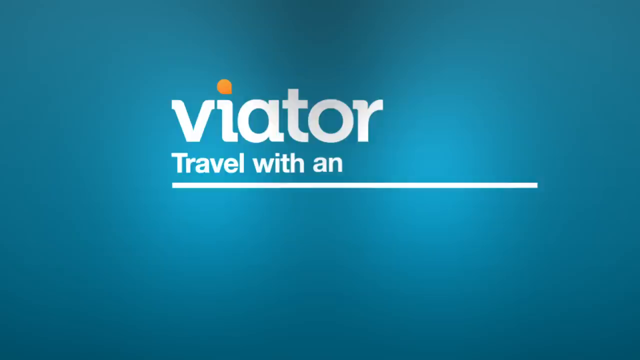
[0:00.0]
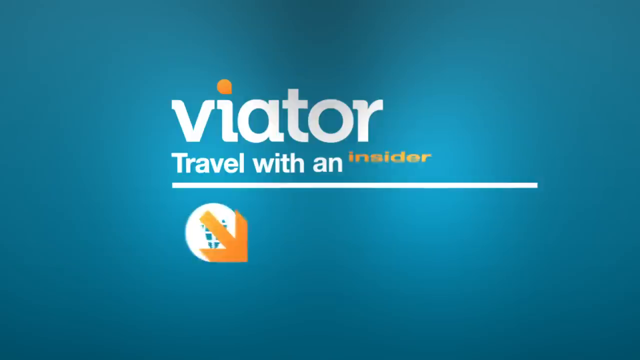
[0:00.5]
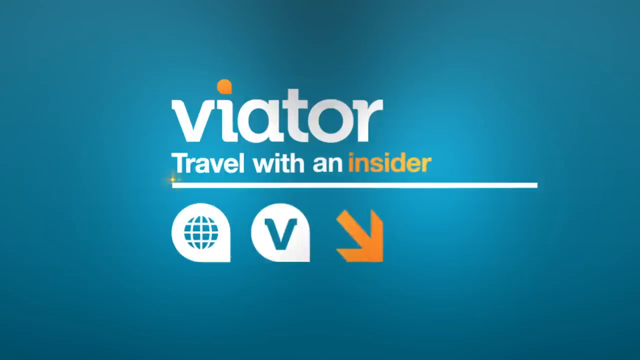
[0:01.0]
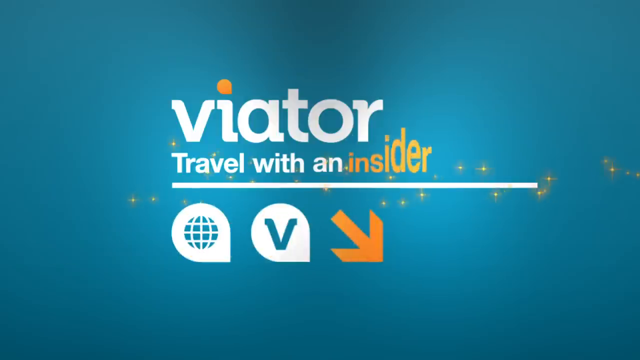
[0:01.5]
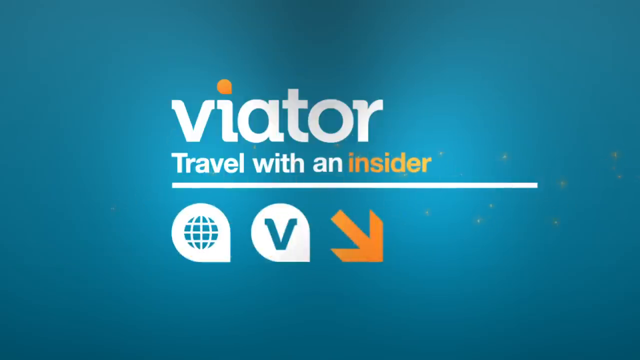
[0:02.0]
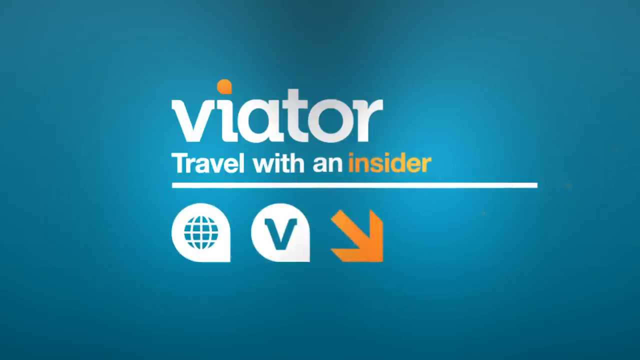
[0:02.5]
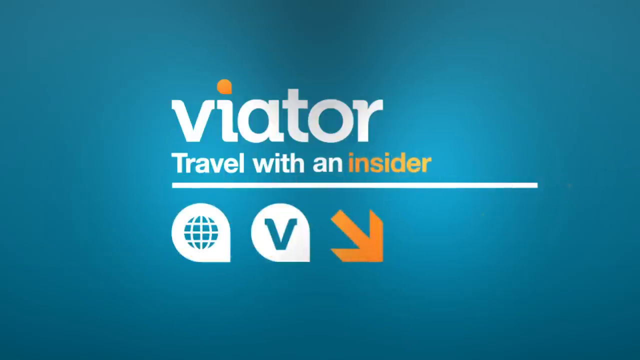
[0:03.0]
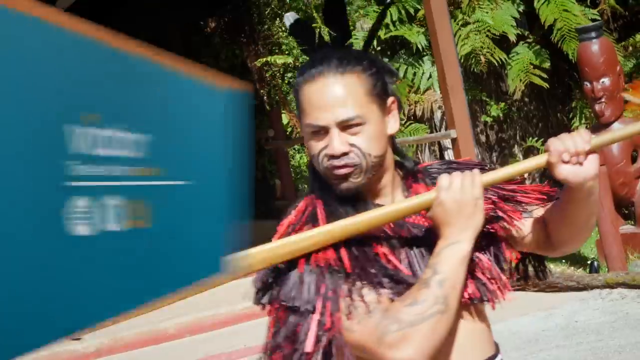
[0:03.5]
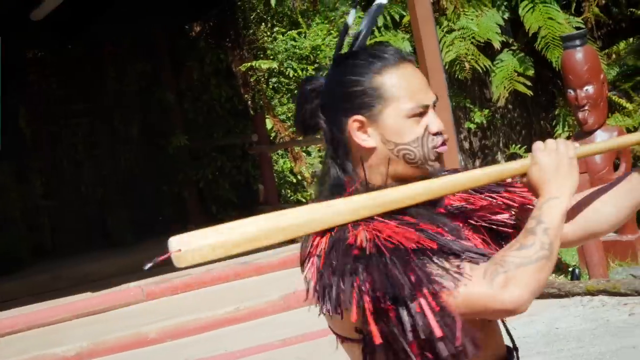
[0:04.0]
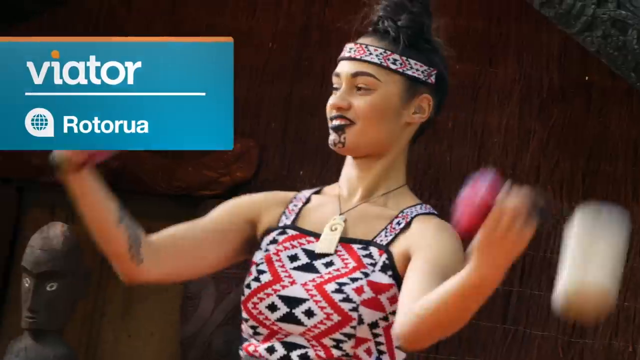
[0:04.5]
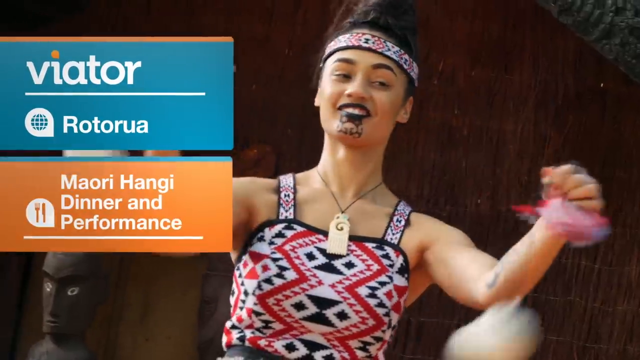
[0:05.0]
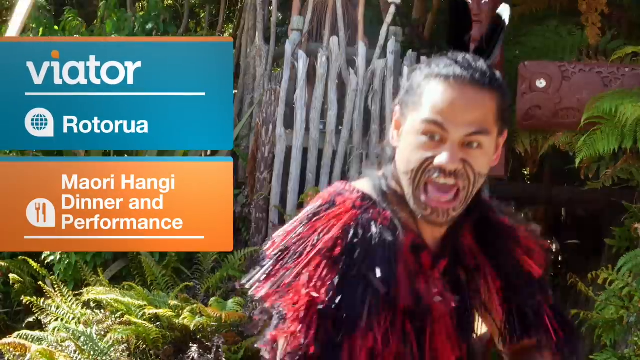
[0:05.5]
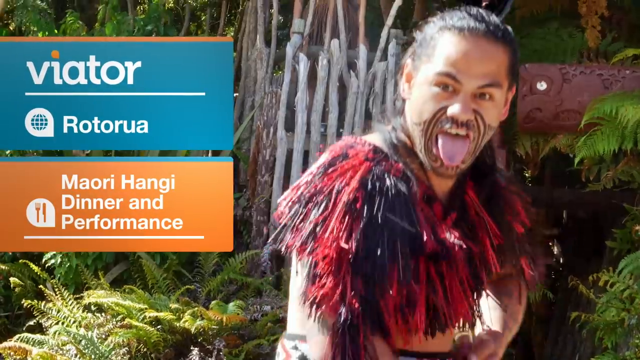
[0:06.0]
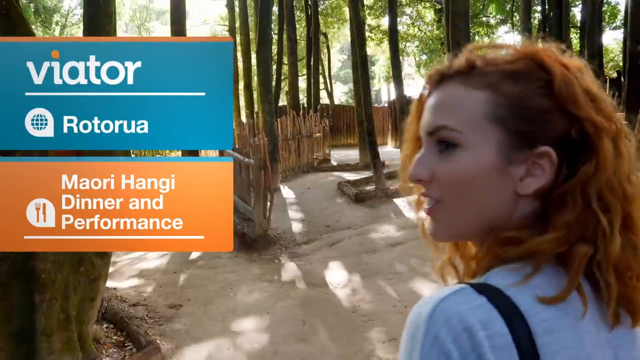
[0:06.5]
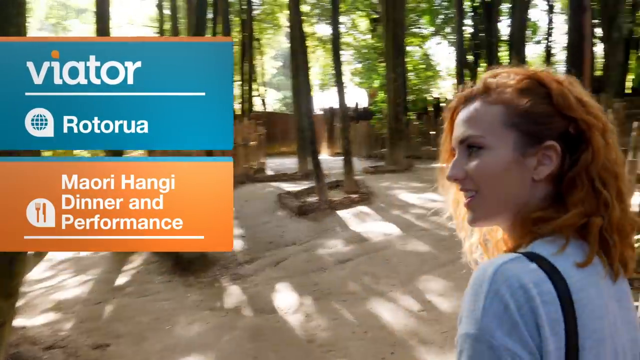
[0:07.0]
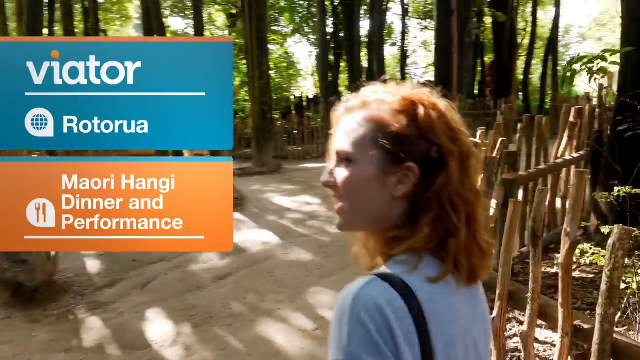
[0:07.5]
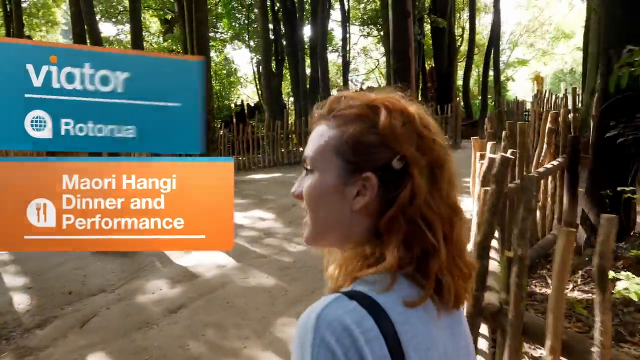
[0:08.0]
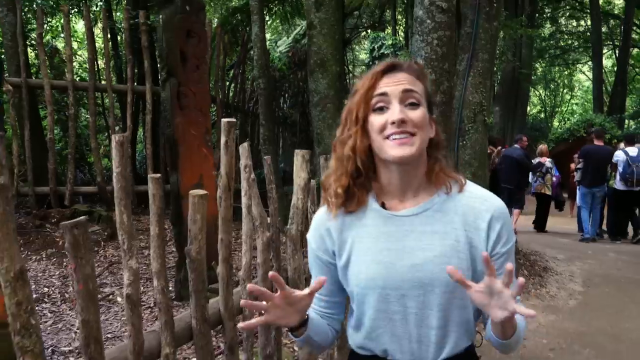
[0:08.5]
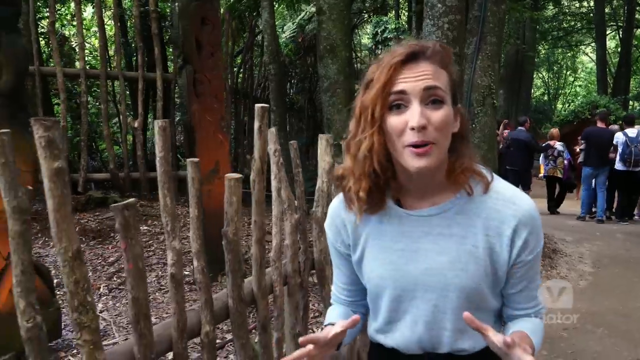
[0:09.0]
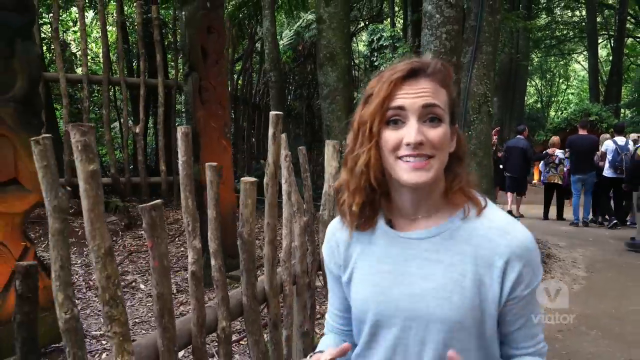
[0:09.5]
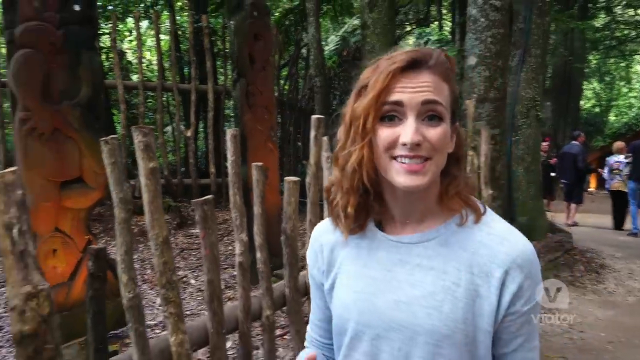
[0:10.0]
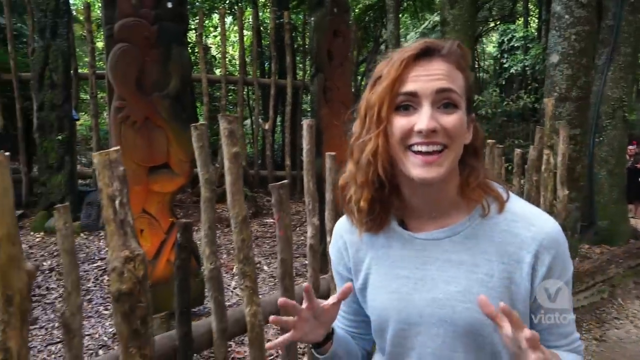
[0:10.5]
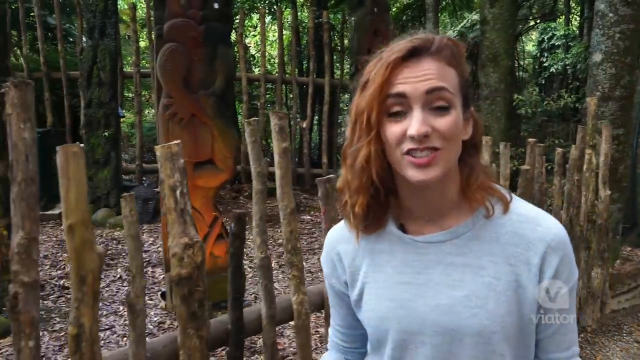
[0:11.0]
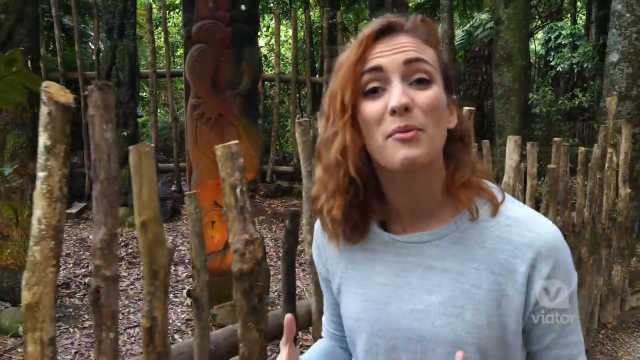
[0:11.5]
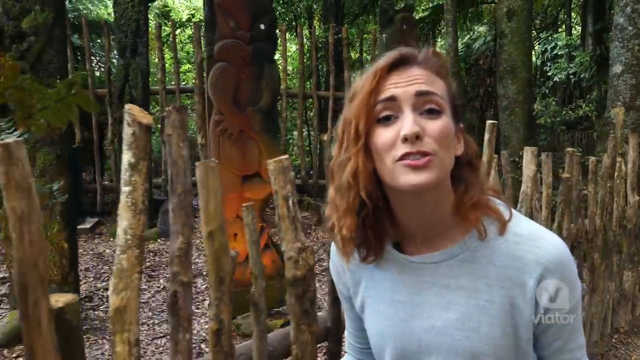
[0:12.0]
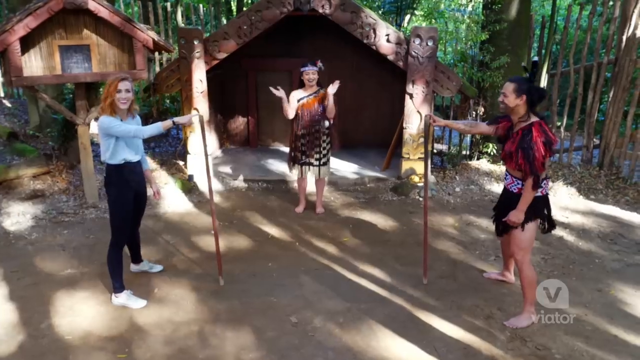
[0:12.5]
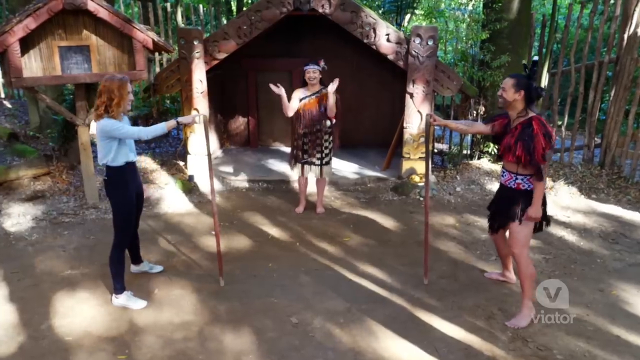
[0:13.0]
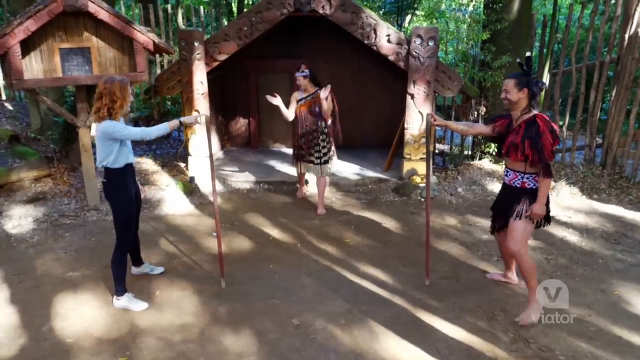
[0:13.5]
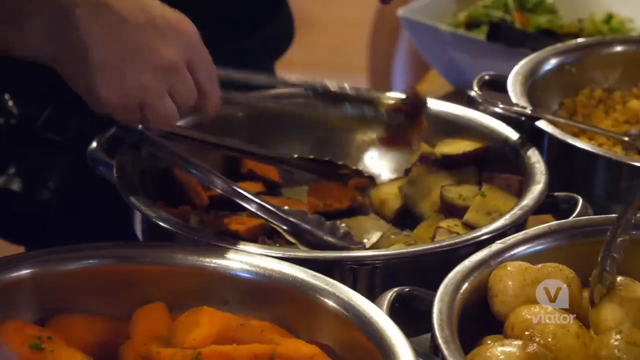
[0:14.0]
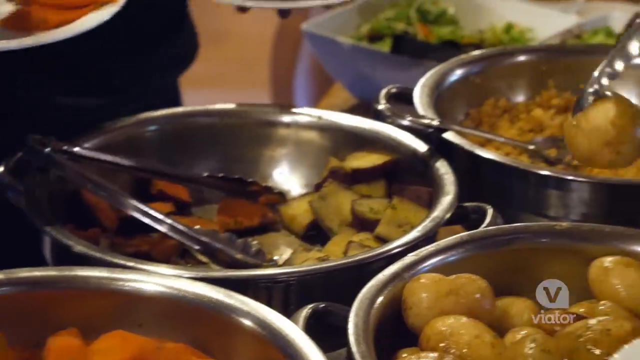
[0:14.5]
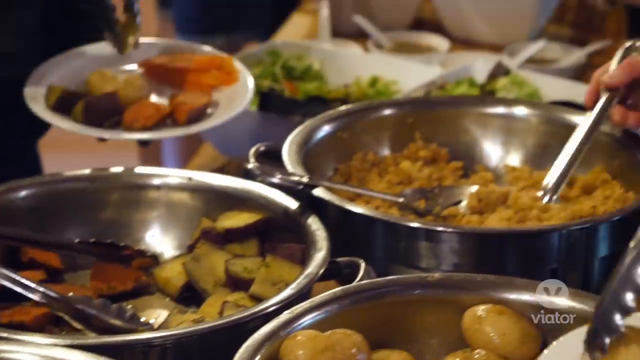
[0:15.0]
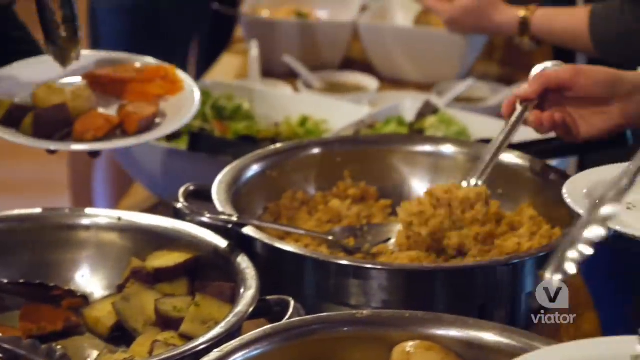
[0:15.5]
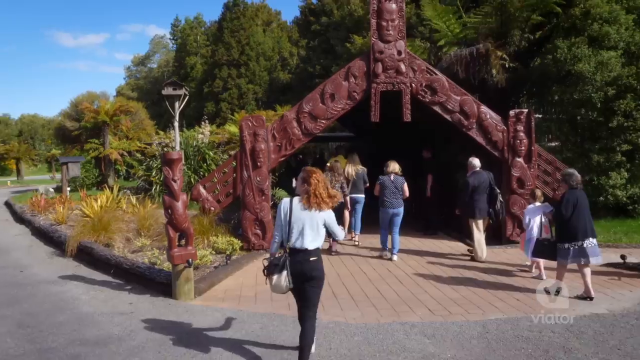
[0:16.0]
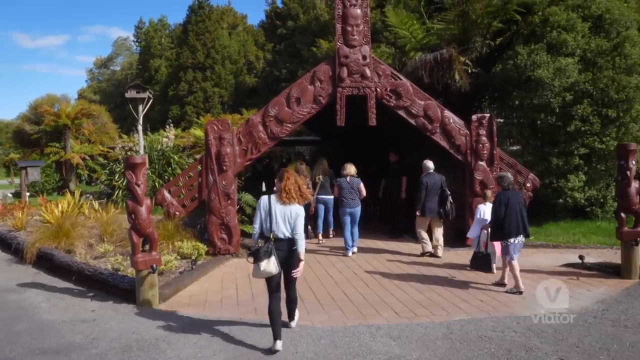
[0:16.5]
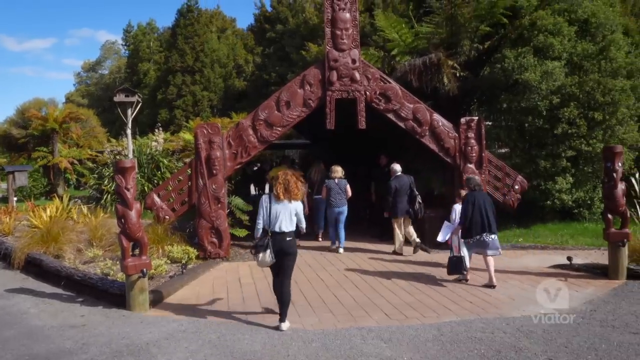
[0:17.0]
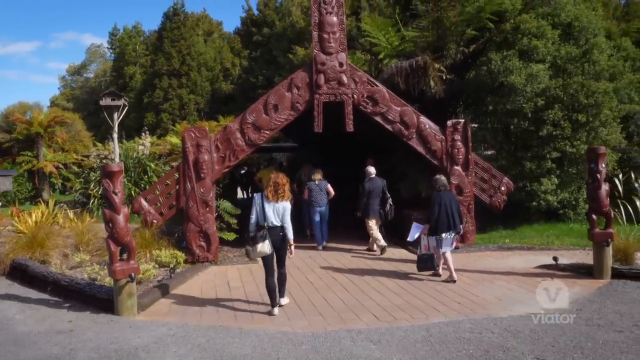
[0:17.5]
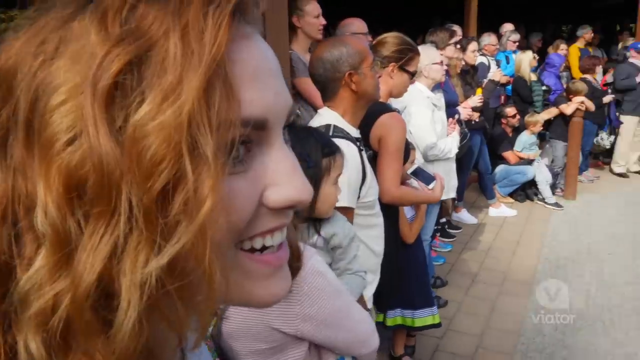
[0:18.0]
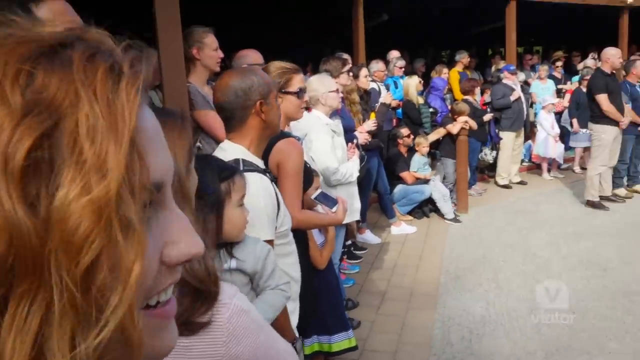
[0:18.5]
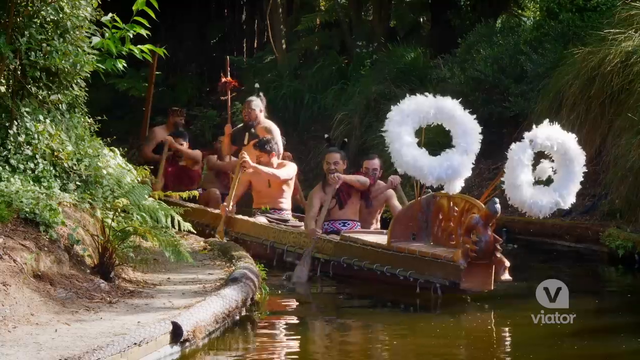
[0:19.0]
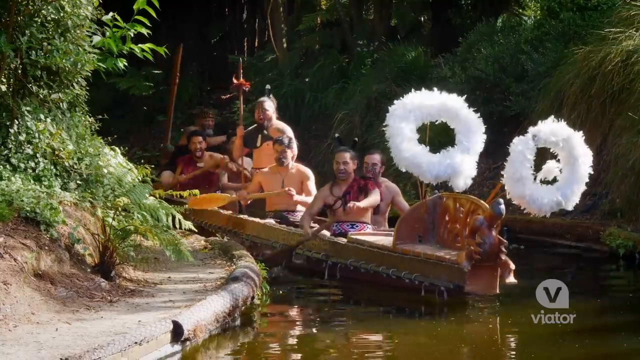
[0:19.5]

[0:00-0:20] The video opens with a title that says "Maori Hangi Dinner." Three different tribal people appear: first a man with a stick in his hand, then a woman swinging balls on some type of string, and then a man who is apparently the same man as the first. The shot pans to what seems to be the host of the show, a white woman with brown curly hair, who walks and talks to the camera along a pathway lined with a fence made of different sized sticks. In another scene she stands holding a stick across from a man holding a stick, while a woman in the center claps her hands. The shot then pans to a few of the native people, apparently about six or seven, sitting in a canoe going down a stream. It seems to be some sort of demonstration, since people surround all of these displays.